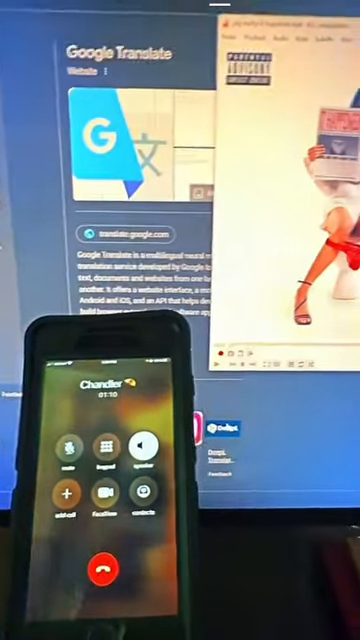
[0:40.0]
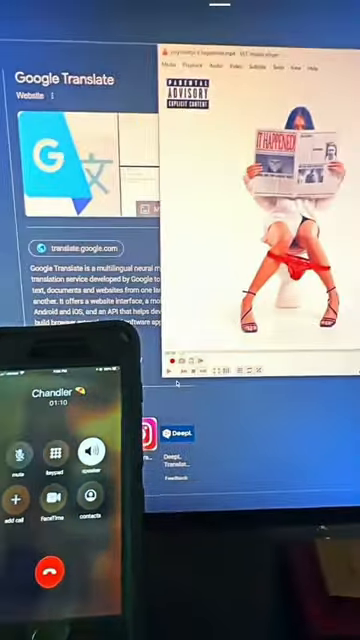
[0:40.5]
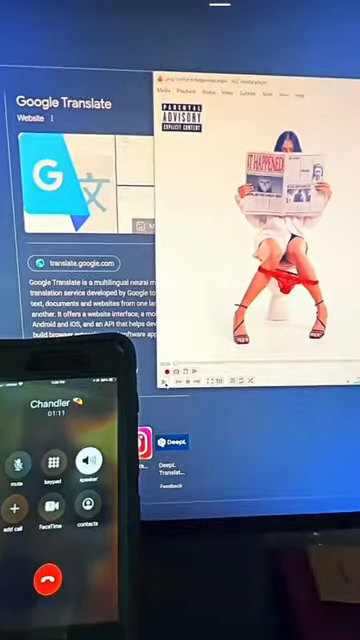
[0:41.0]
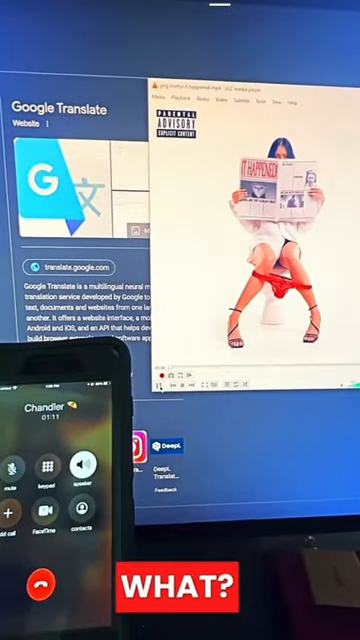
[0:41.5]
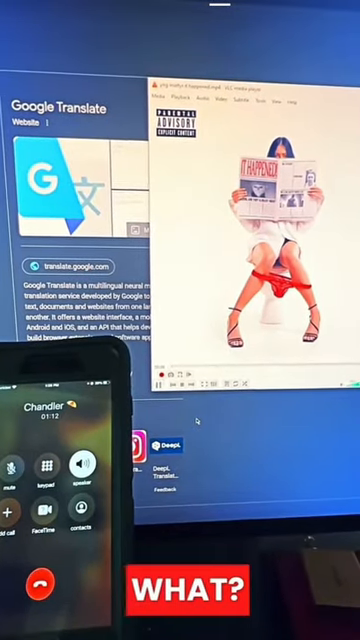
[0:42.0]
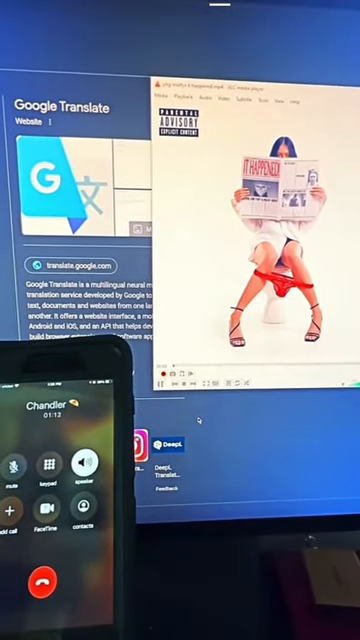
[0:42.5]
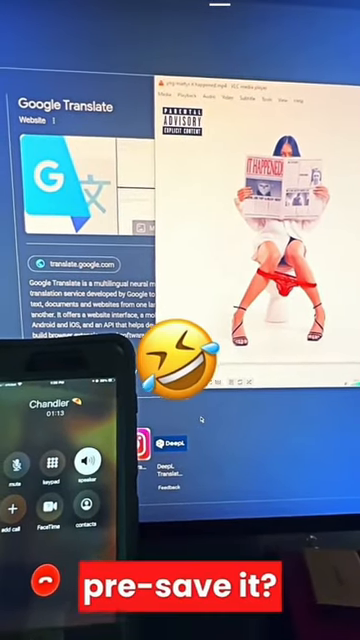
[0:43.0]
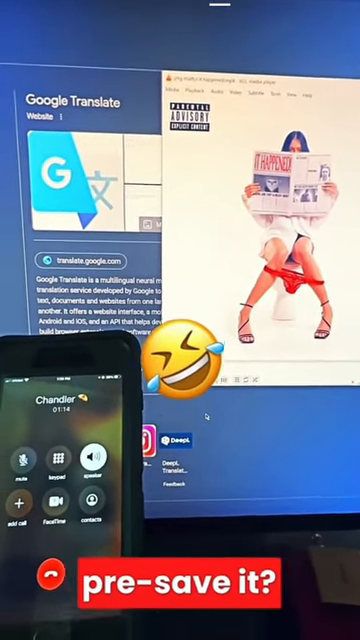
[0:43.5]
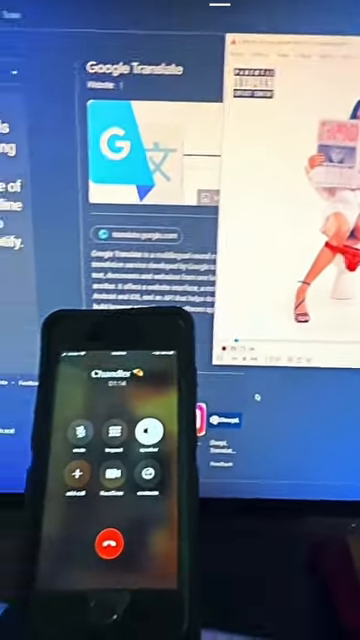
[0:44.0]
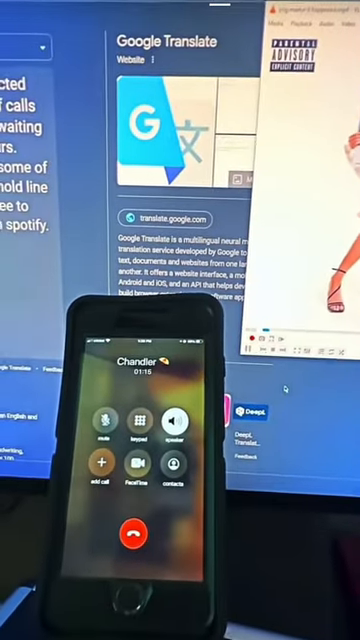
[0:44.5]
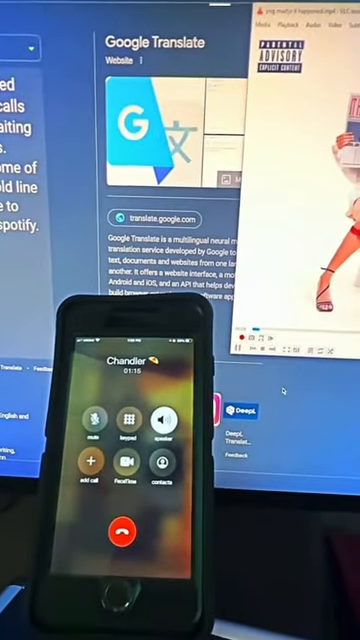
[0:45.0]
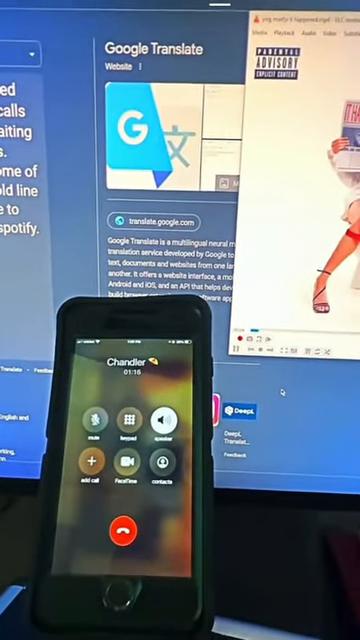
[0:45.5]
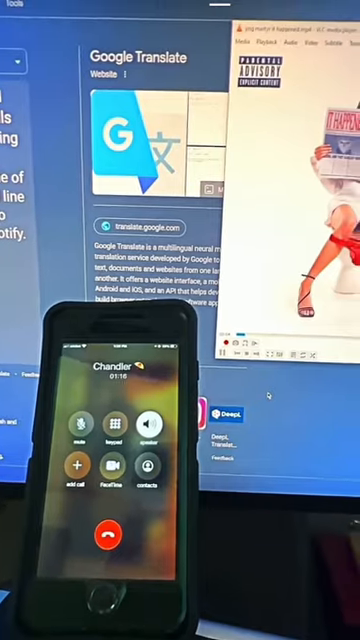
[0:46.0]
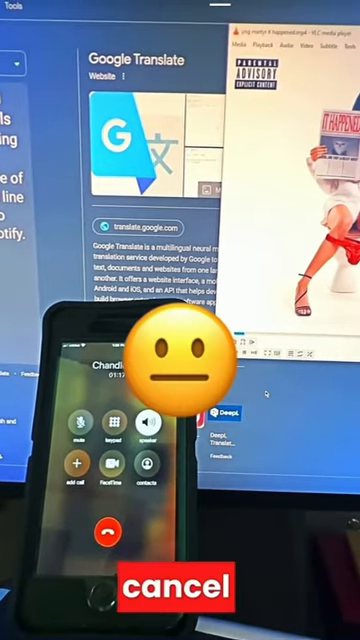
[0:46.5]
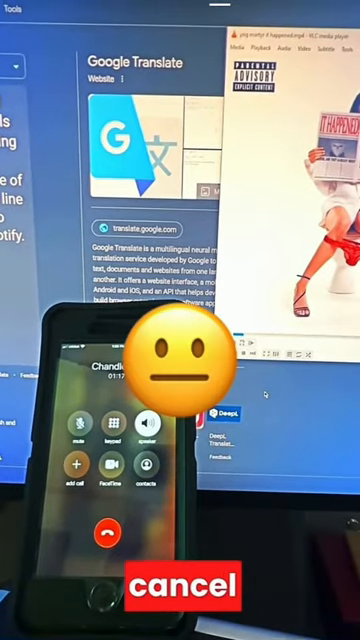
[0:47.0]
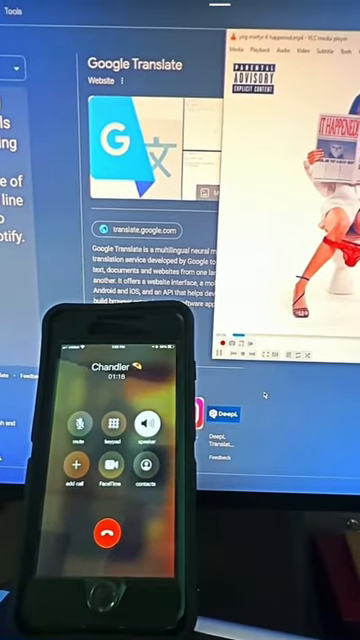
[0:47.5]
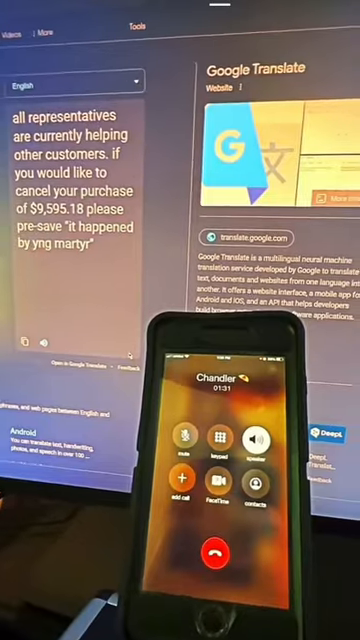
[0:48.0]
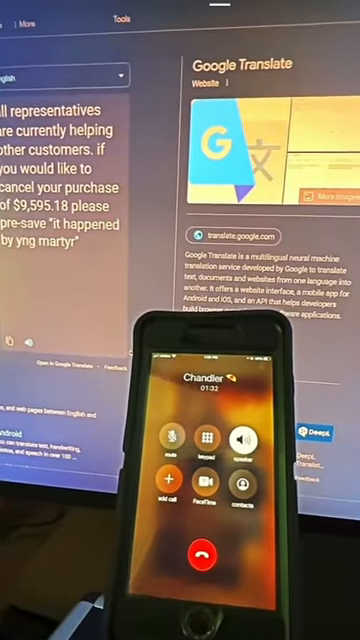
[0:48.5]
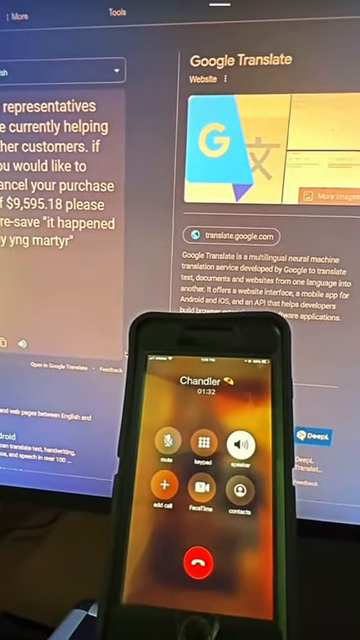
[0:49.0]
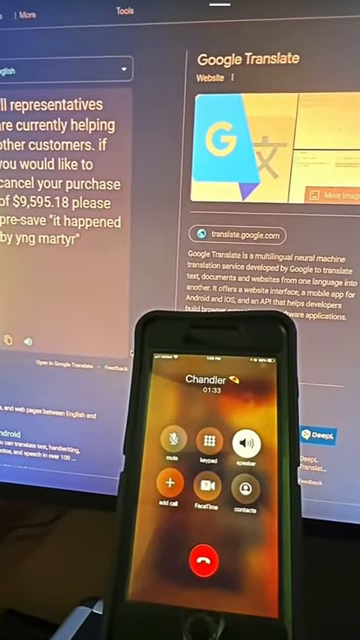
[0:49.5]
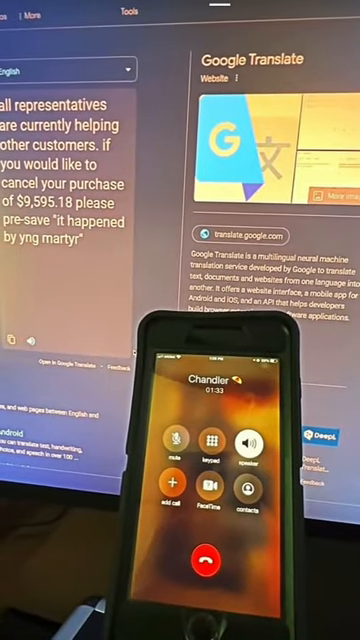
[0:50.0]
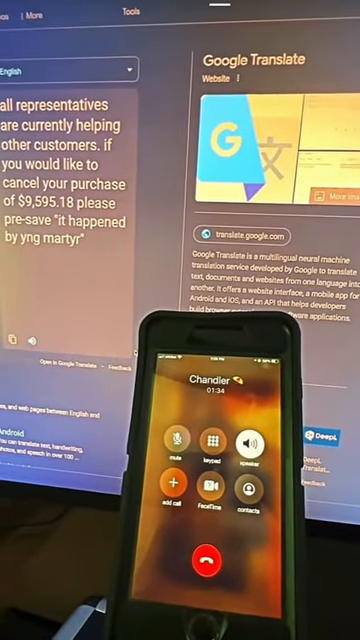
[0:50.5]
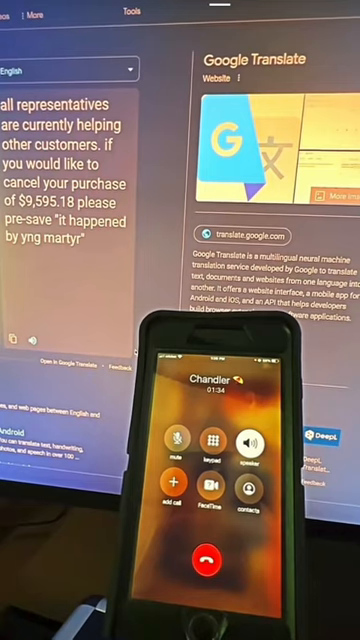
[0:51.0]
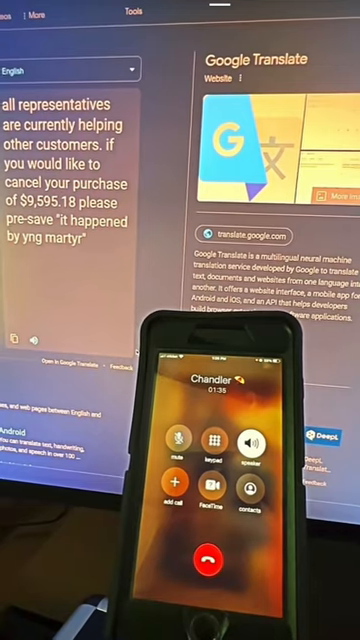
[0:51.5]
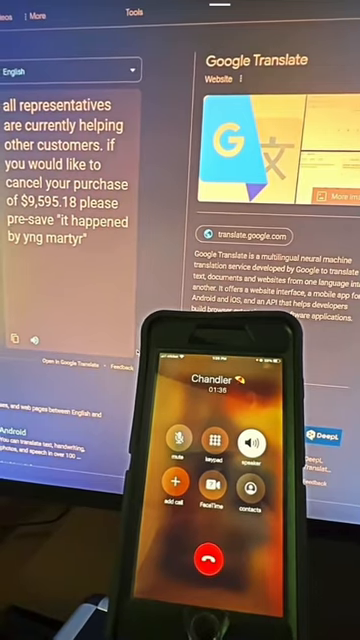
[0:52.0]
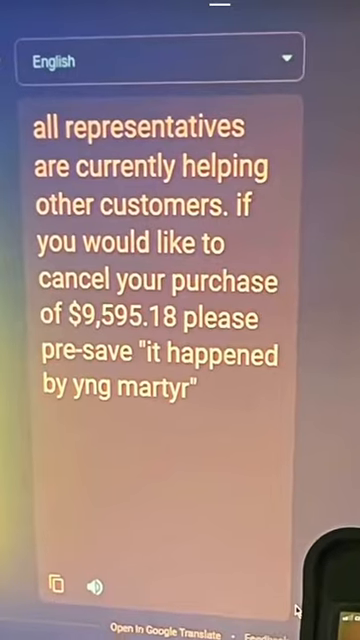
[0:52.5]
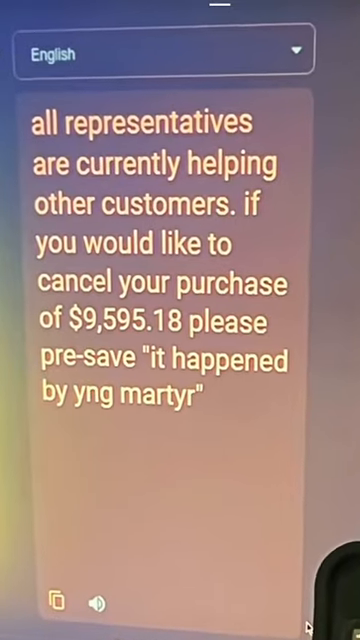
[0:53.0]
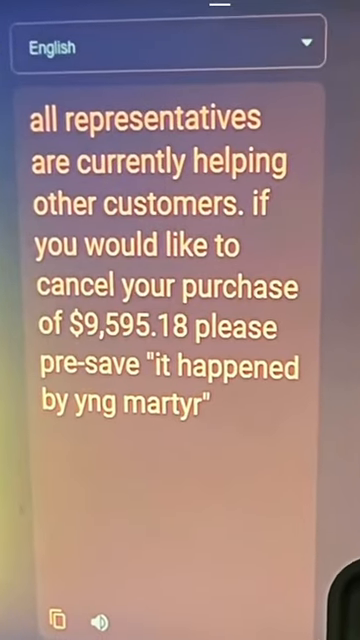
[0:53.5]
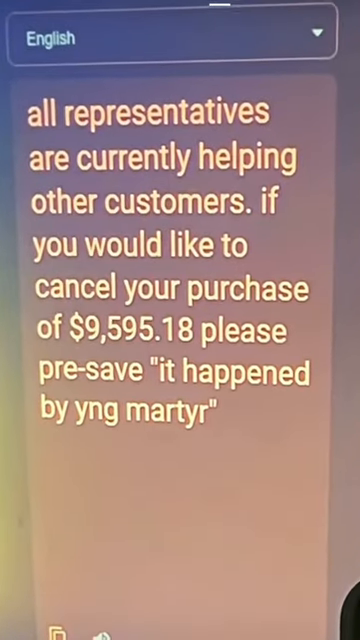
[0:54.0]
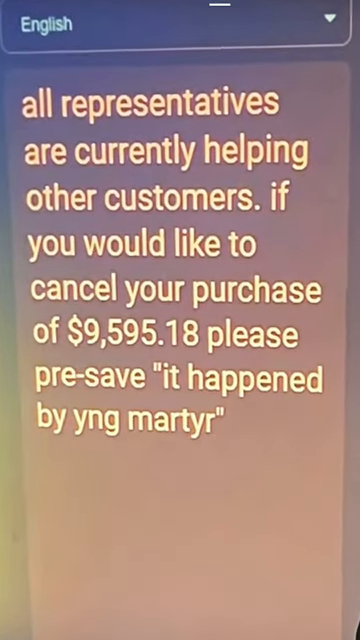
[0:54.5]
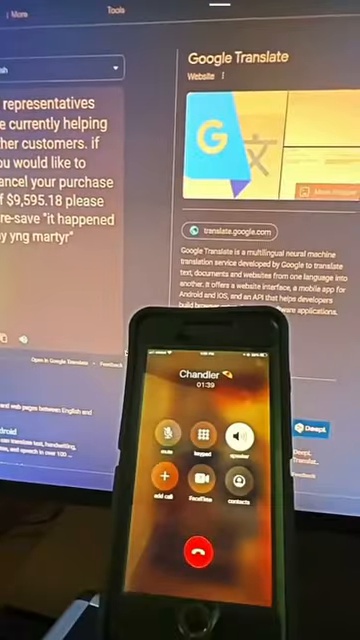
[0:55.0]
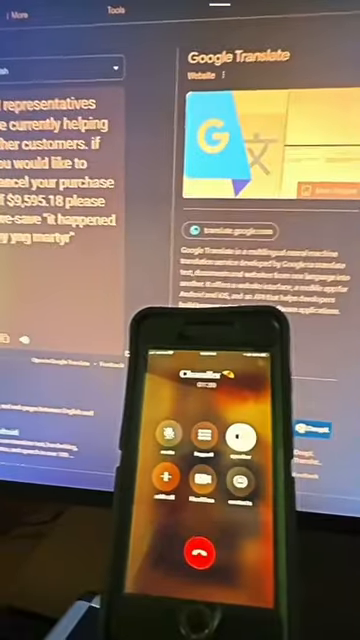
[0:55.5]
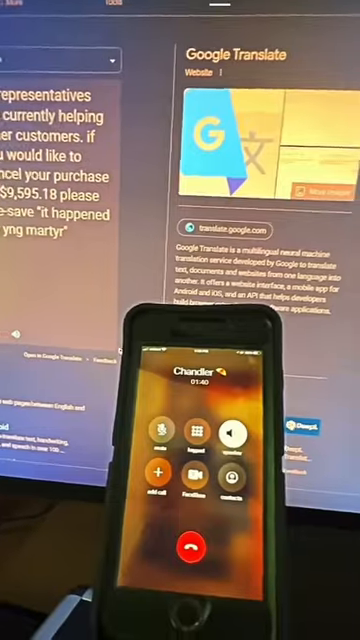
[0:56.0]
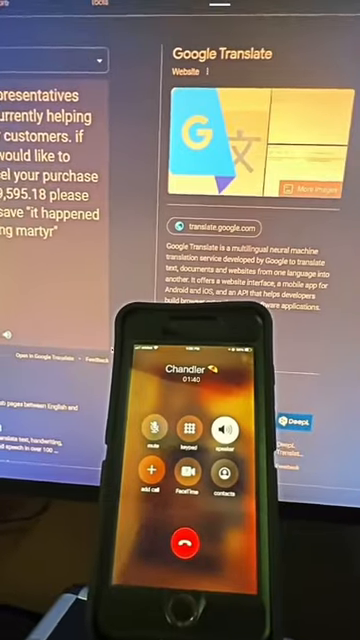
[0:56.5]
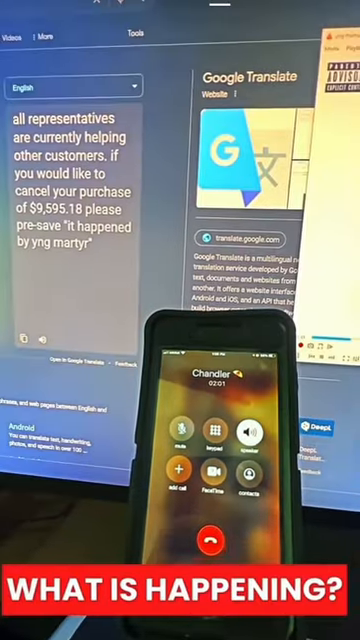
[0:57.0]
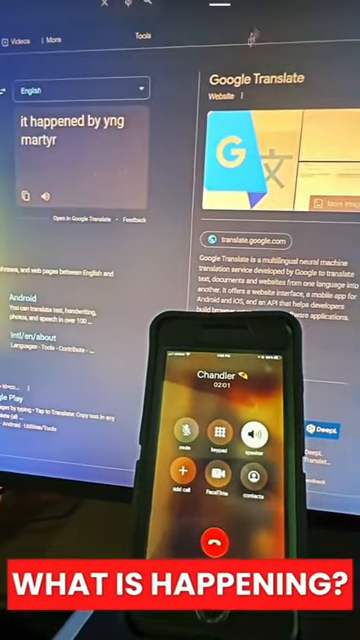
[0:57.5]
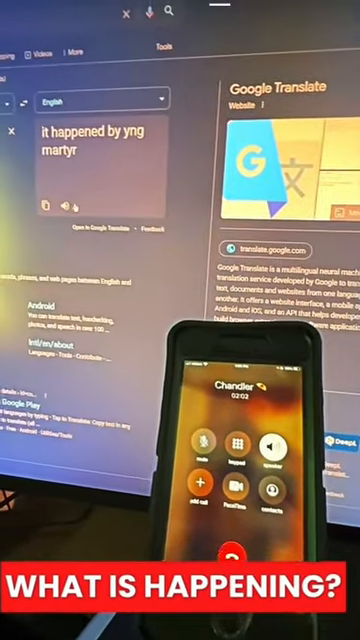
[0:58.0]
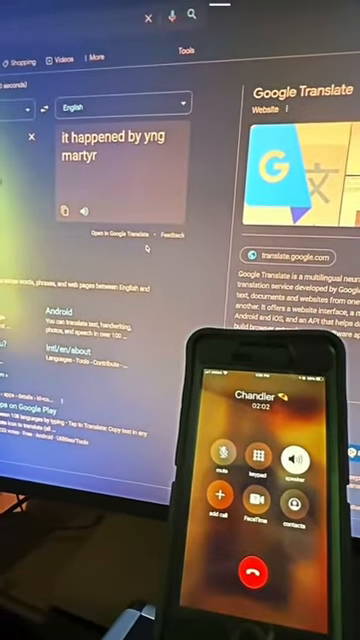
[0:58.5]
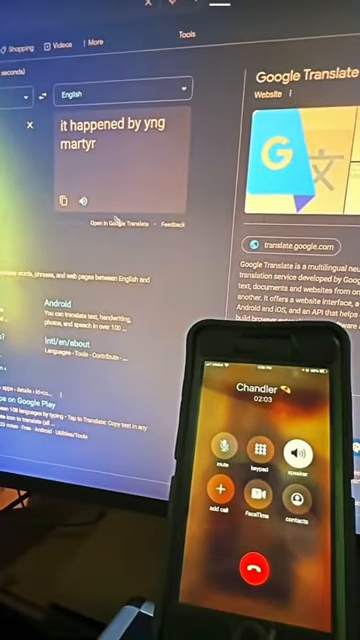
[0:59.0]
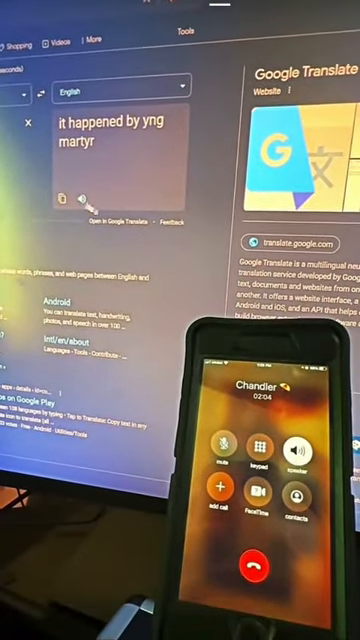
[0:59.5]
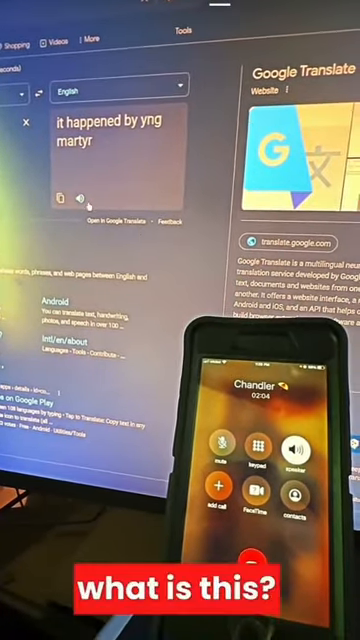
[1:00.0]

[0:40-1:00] Chandler is still on the call. Half of the album cover is visible, showing the lady sitting on the toilet reading a newspaper; she wears red high-heel strappy shoes, and her red panties are down just above her calves or just below her knees. The call is well over a minute long. He plays the song and then says "what?", shown in white on red. He then says "please save it", and a laughing emoji appears on screen. He says "cancel" again, and an emoji with a straight line for a mouth appears. The call passes a minute and a half. He zooms into what Google now says: "all representatives are currently helping other customers. If you would like to cancel your purchase, please pre-save it. Happened by young Morta." He then says "what is happening?", and the Google thing picks it up as "it happened by young Morta".